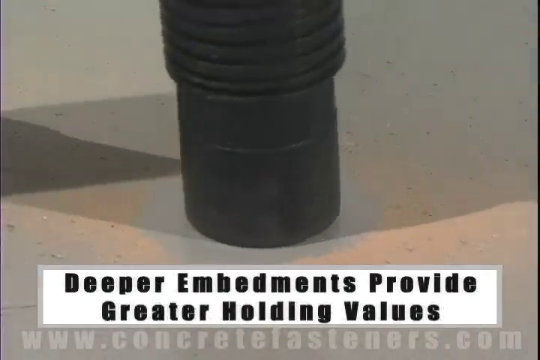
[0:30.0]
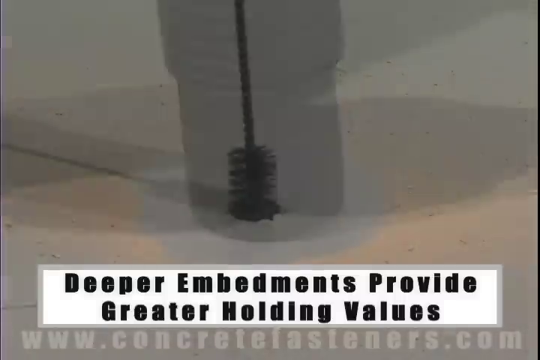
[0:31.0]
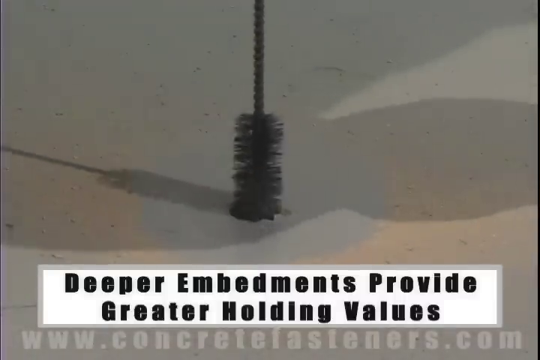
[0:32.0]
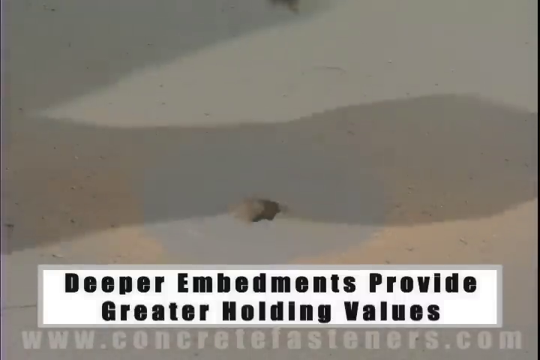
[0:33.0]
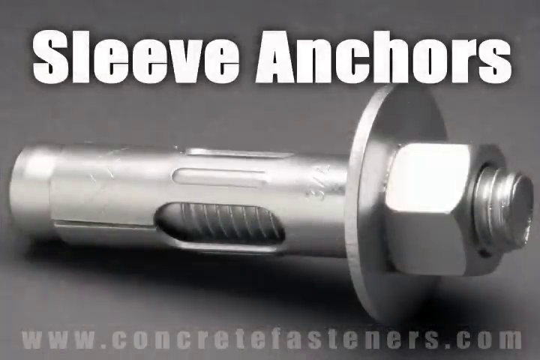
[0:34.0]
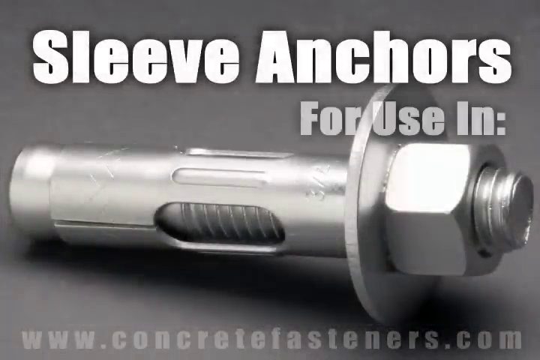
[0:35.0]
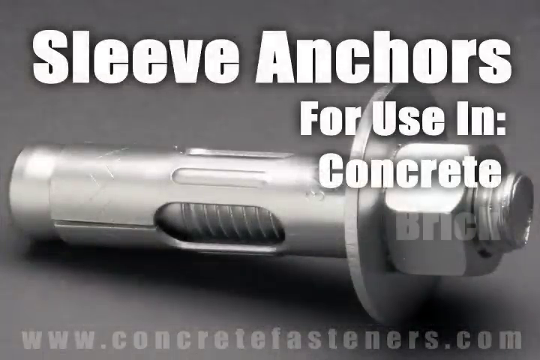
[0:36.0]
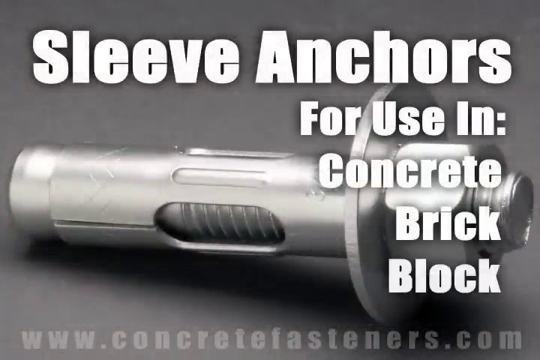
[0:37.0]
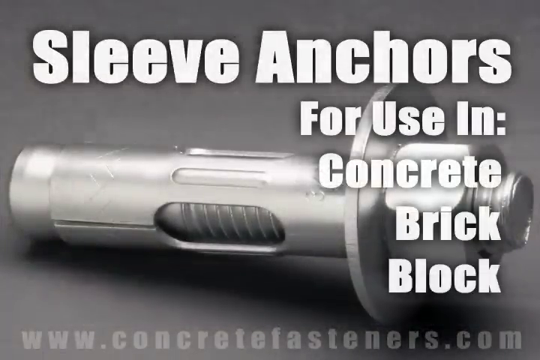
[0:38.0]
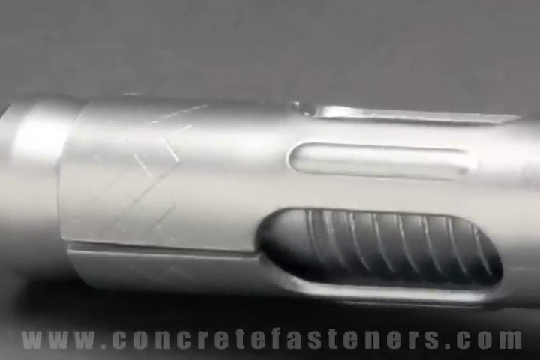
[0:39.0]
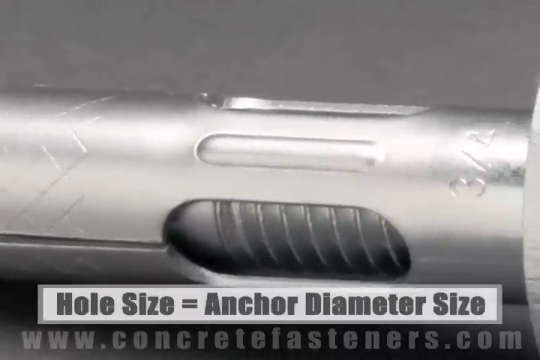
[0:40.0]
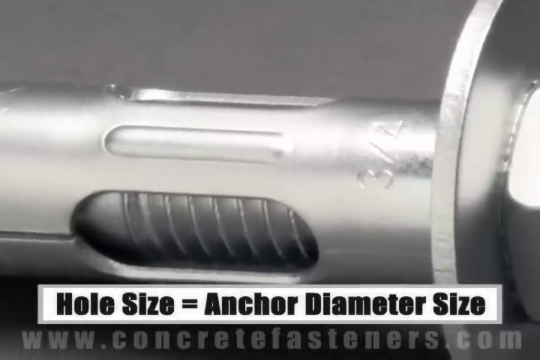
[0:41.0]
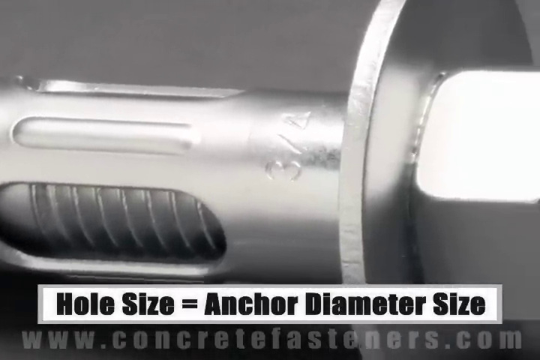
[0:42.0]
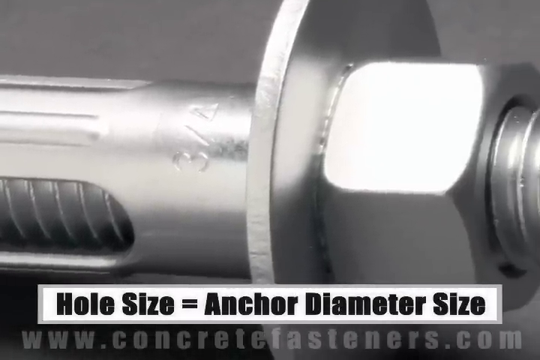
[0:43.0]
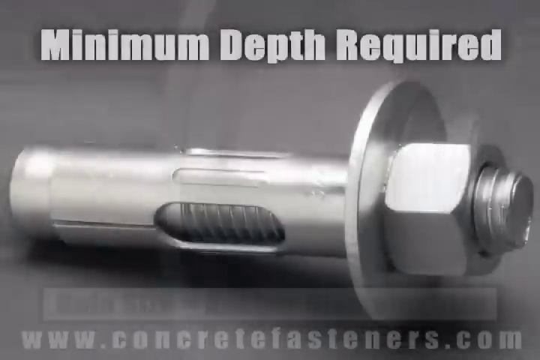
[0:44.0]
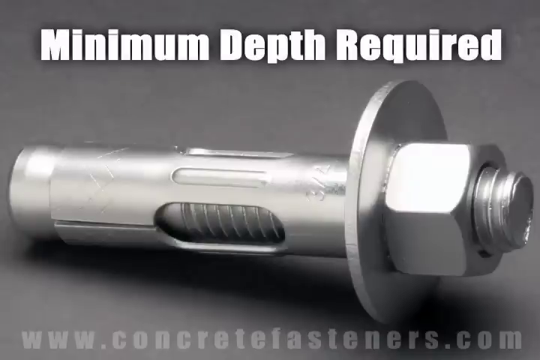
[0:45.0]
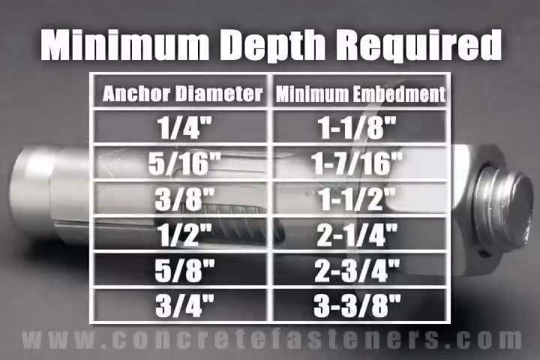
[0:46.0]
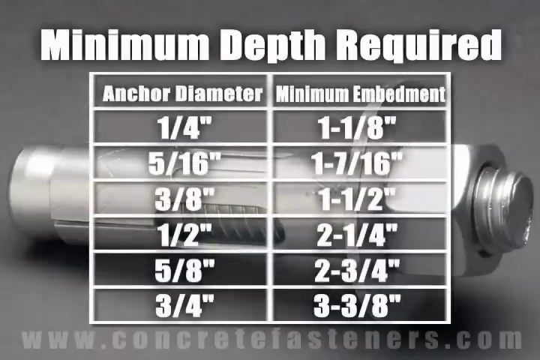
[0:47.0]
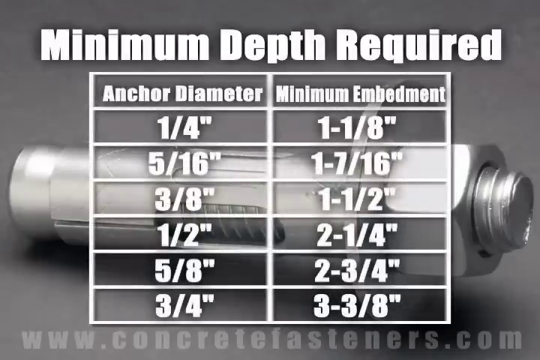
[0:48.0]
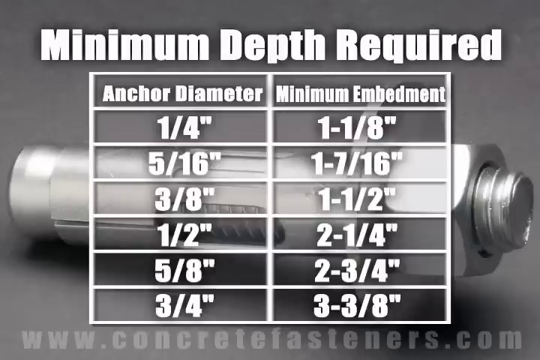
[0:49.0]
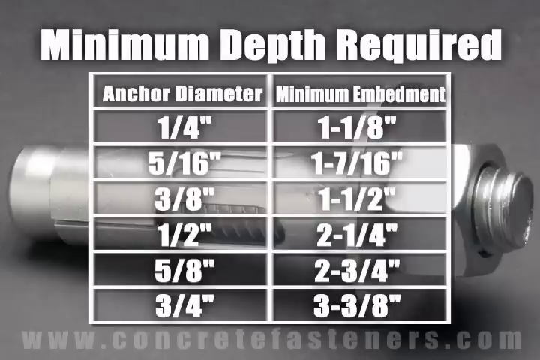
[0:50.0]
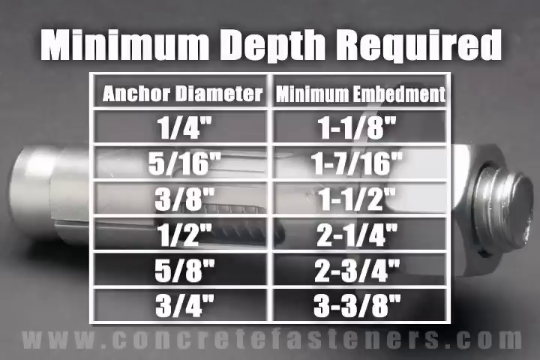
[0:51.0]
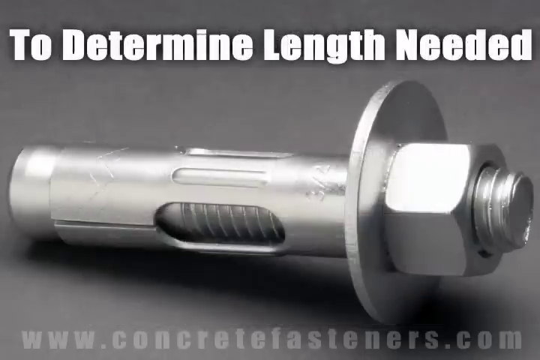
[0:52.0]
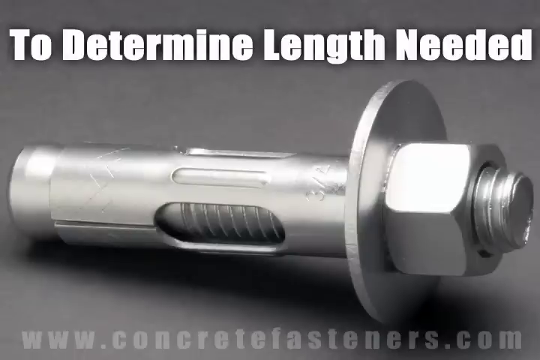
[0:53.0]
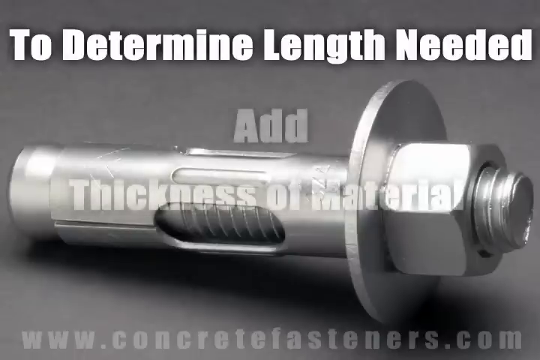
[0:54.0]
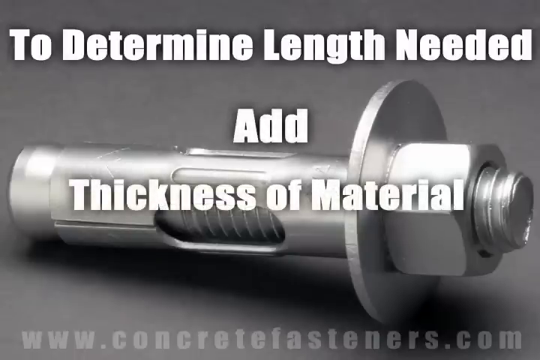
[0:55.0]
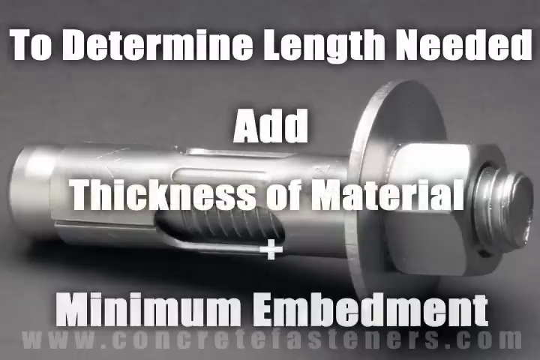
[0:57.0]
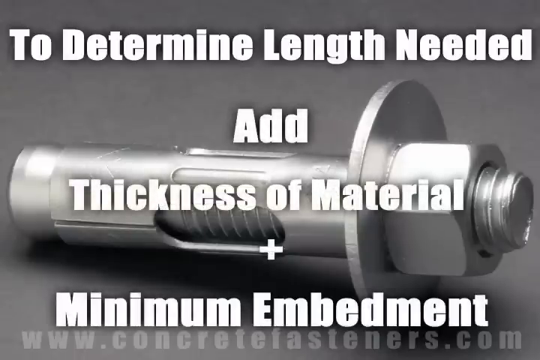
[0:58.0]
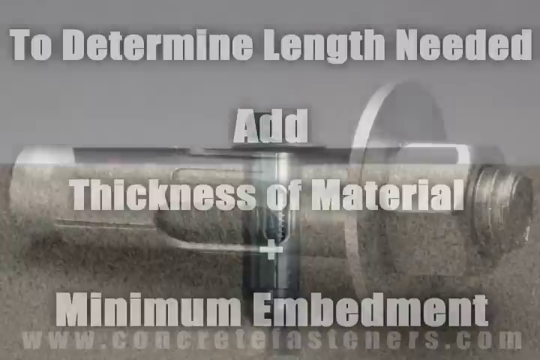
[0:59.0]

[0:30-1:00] The vacuum continues removing the dust from the drilled hole in the concrete, and then a brush clears out any remaining dust. A sleeve anchor is then shown, followed by a table of different anchor sizes. The anchor is shown again, with a sleeve on it, along with the thickness of material and the minimum embedment. A picture then demonstrates where the anchor goes and how it fits into the concrete.